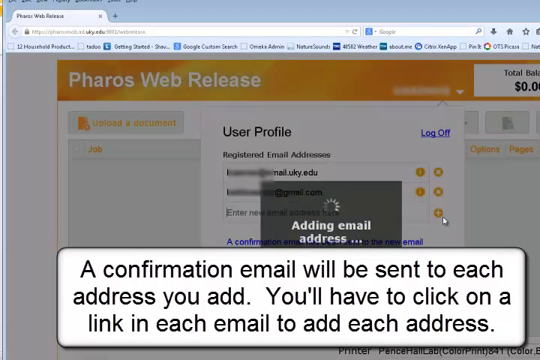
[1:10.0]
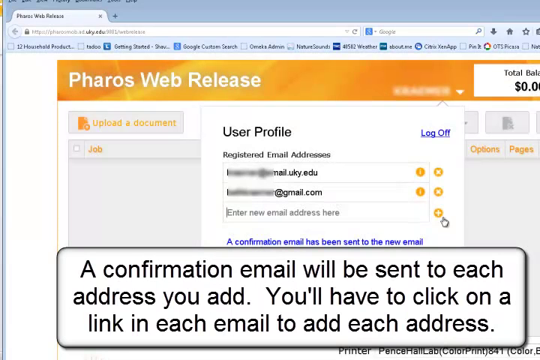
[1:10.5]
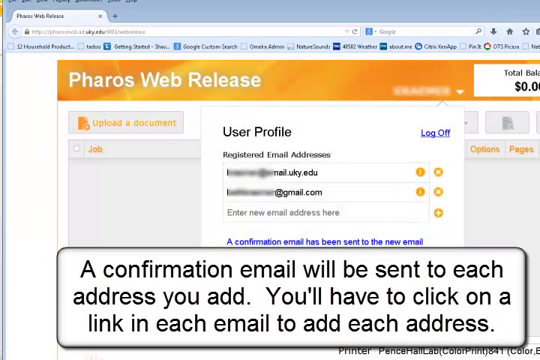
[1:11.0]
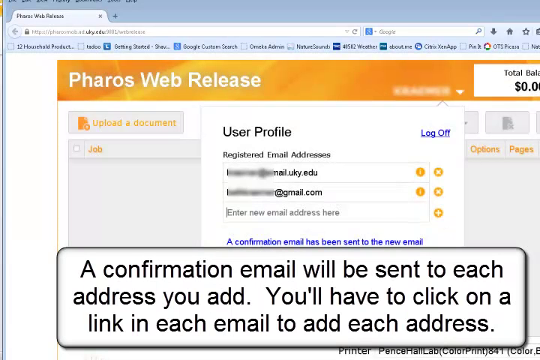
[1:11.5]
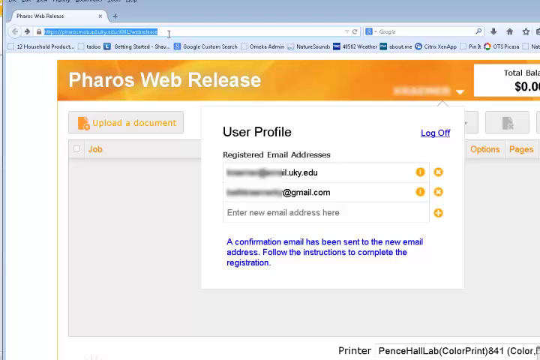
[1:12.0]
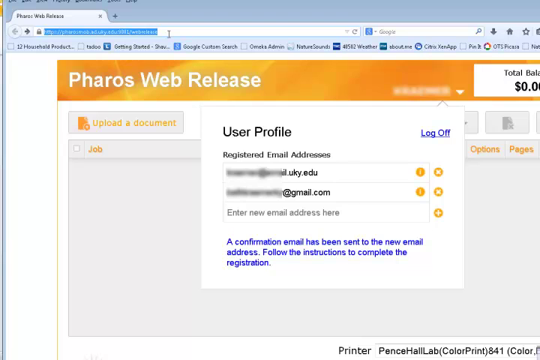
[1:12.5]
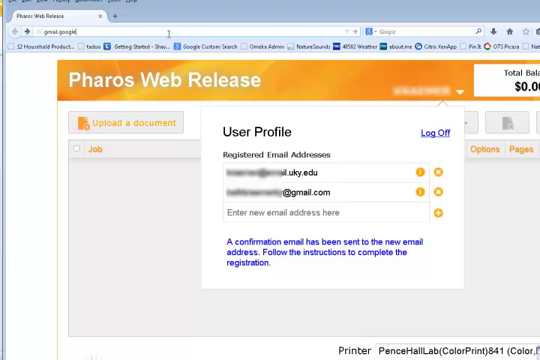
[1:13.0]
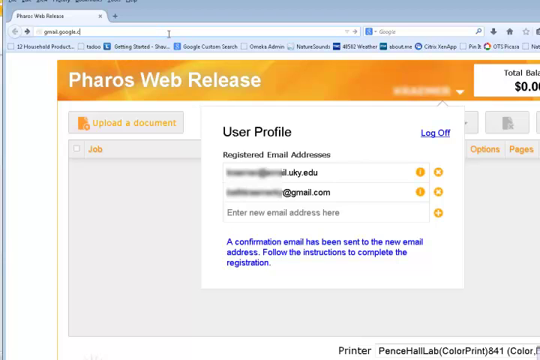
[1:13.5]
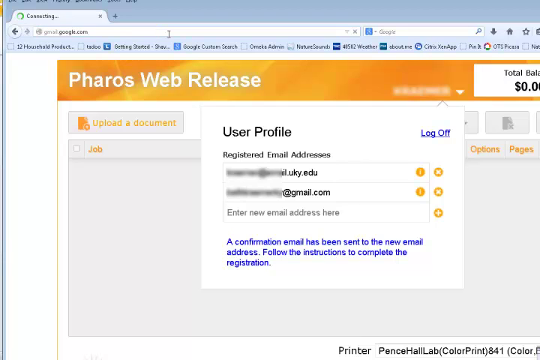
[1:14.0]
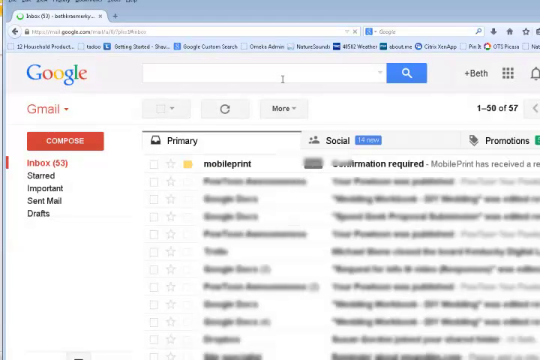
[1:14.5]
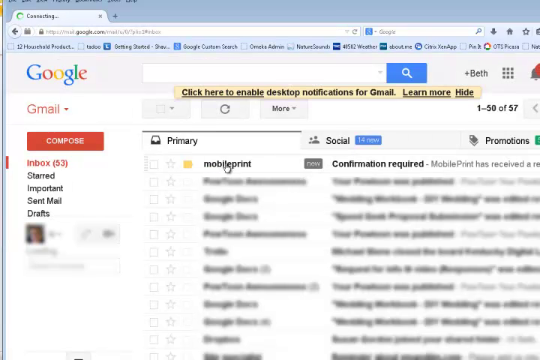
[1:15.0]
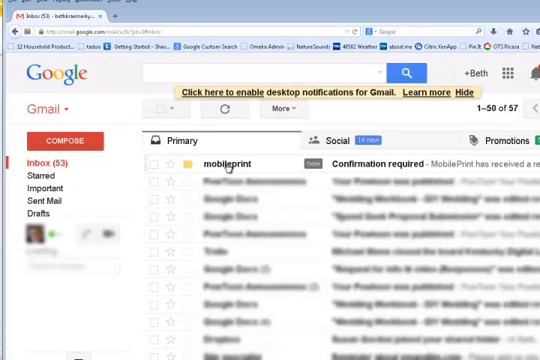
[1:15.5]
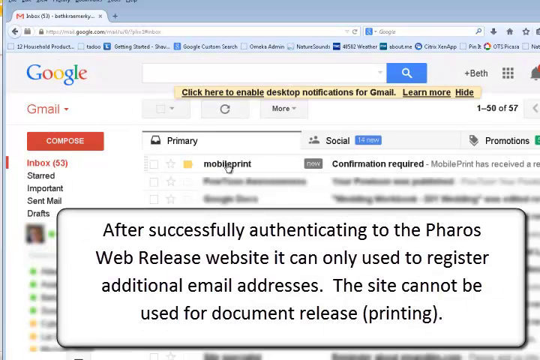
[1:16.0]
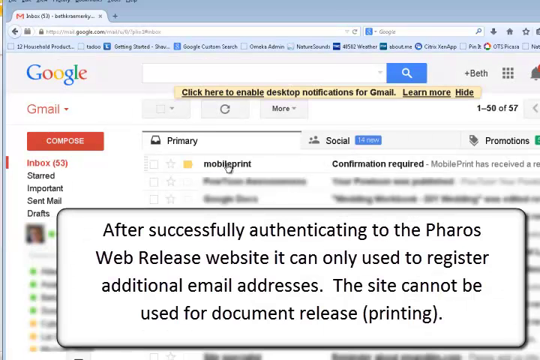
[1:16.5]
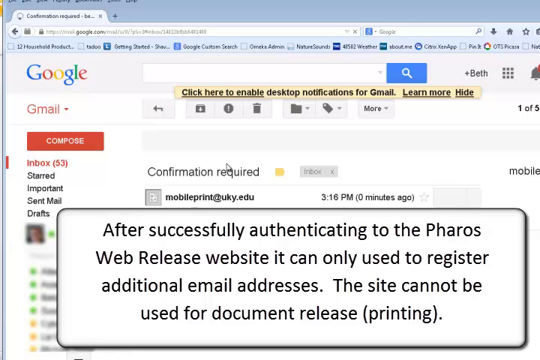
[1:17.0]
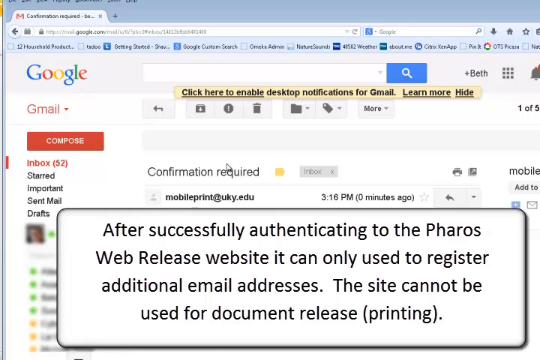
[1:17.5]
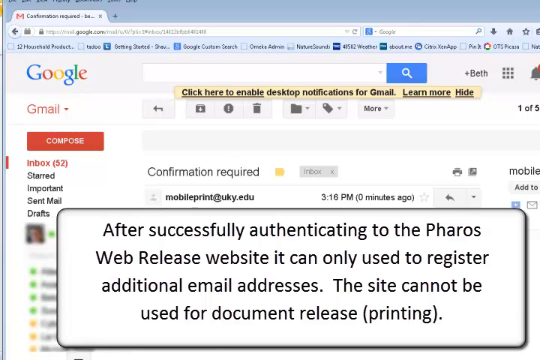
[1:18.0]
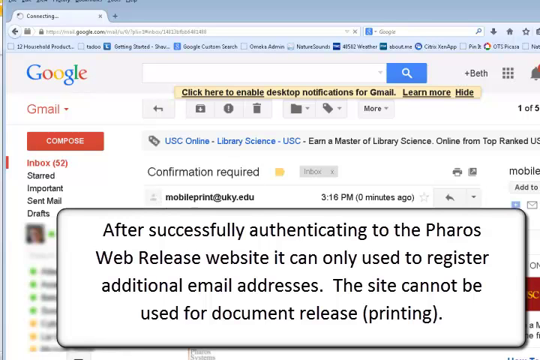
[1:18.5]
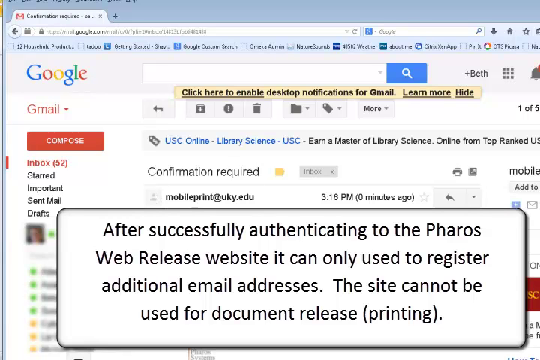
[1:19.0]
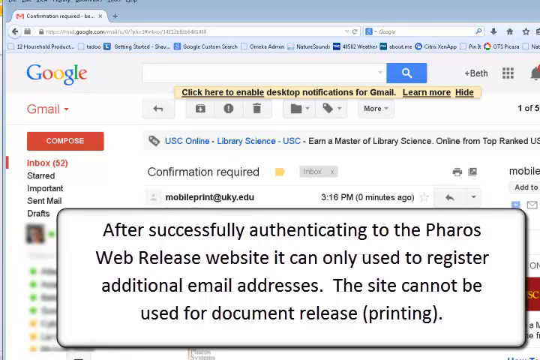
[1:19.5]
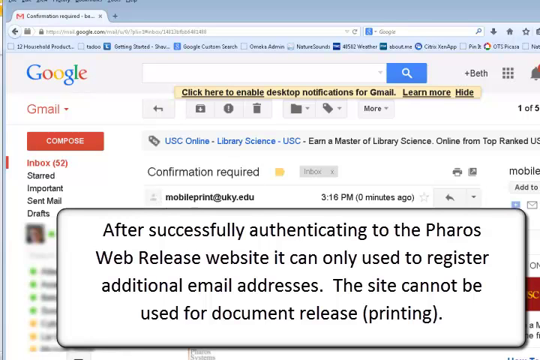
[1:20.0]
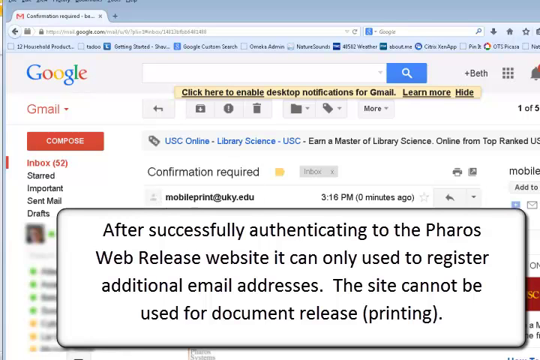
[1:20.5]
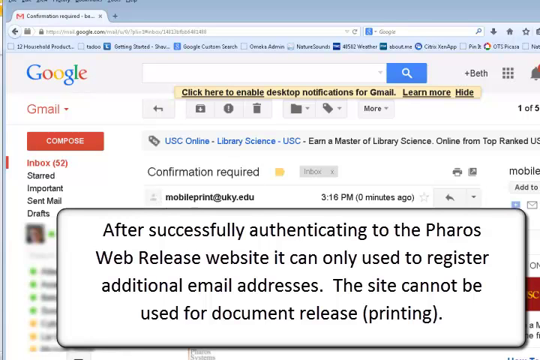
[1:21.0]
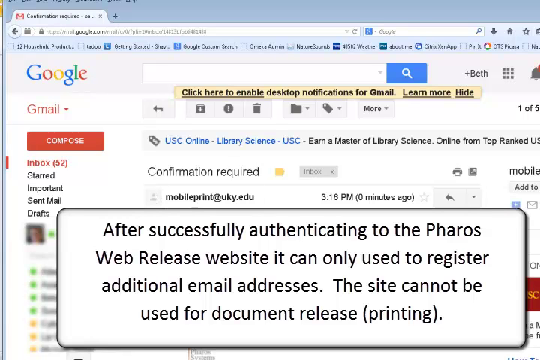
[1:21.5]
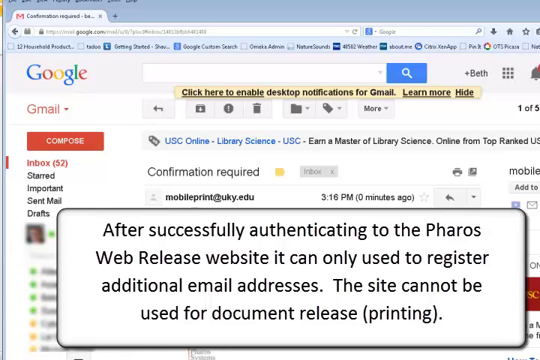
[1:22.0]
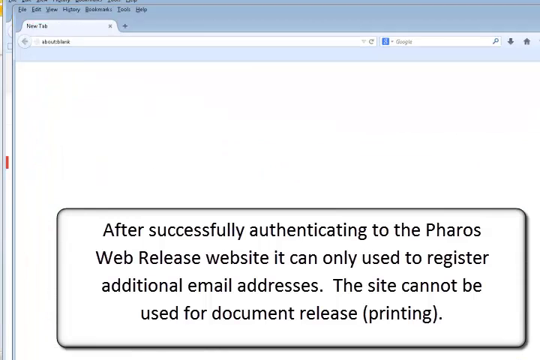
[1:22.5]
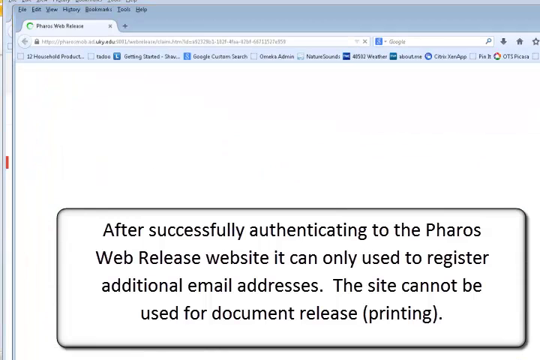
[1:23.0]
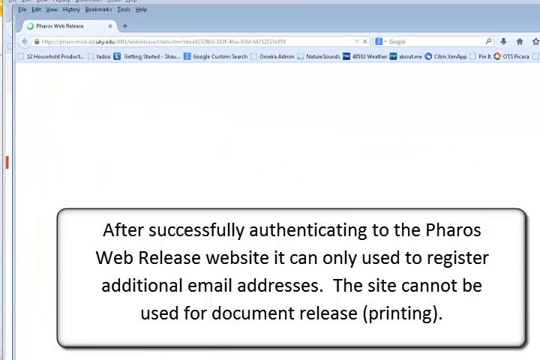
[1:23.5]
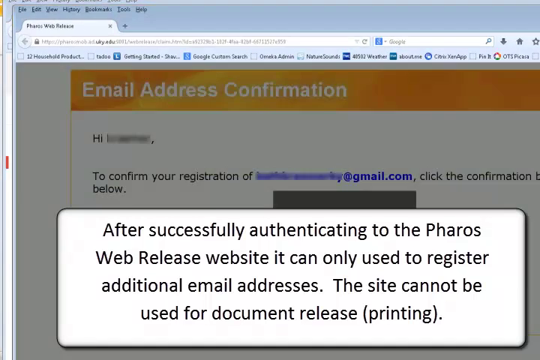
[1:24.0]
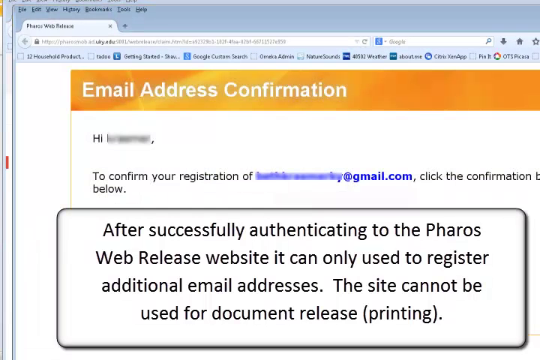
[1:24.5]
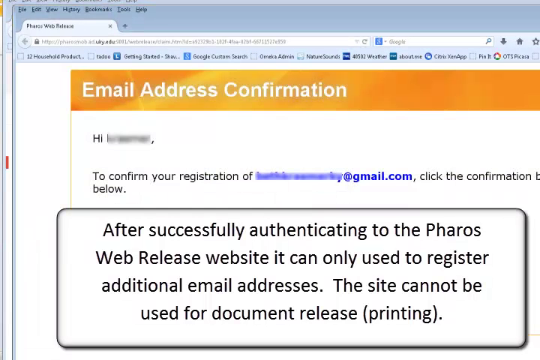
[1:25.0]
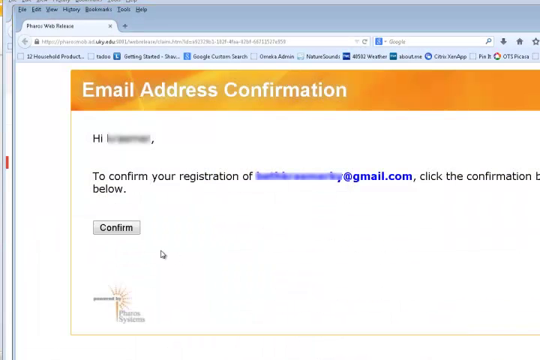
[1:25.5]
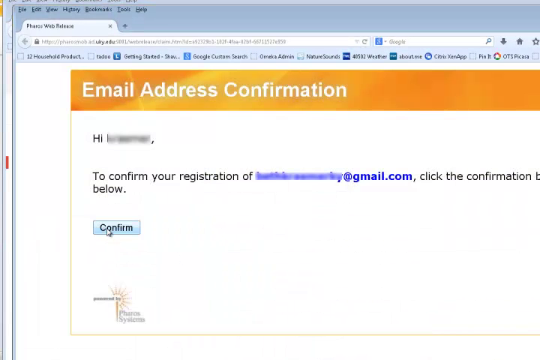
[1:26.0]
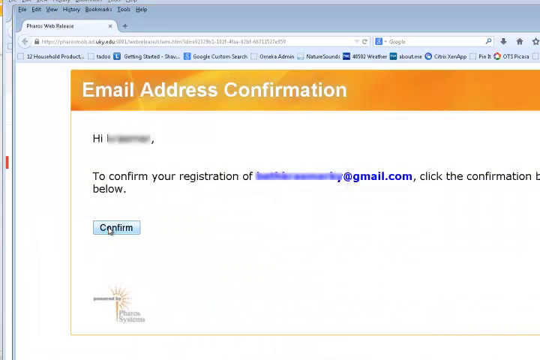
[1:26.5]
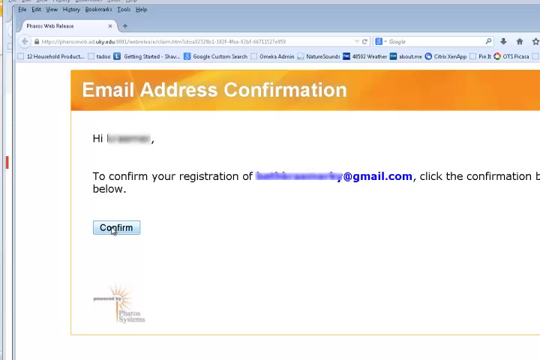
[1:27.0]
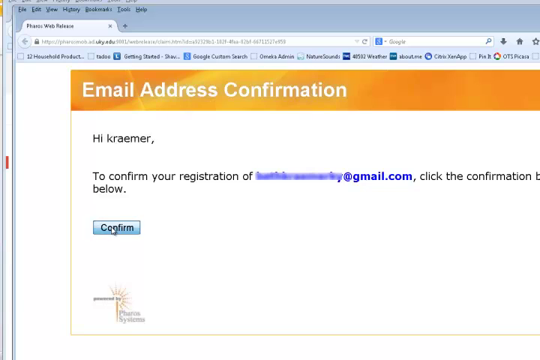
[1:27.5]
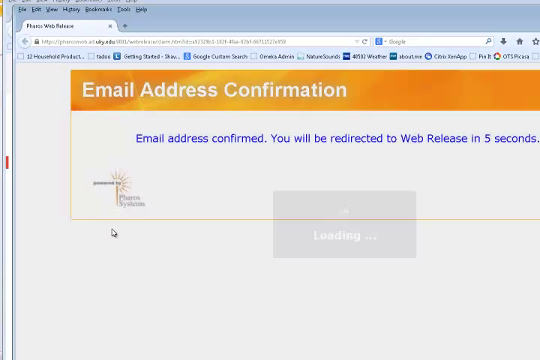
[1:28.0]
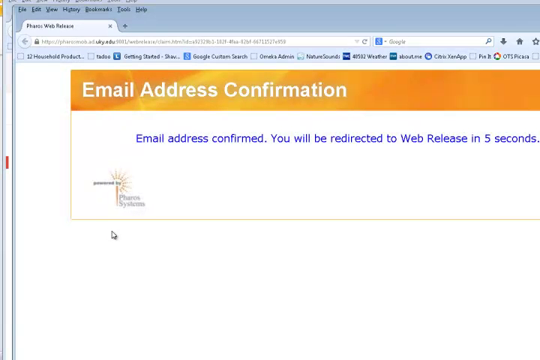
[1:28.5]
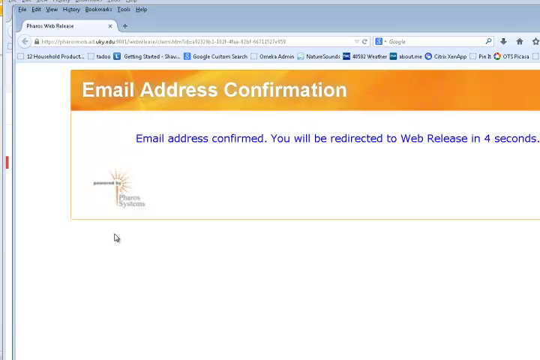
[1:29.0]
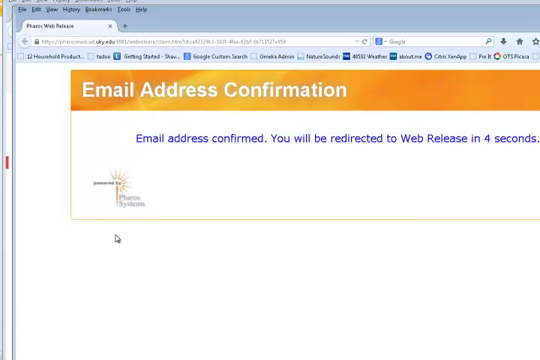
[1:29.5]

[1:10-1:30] The University of Kentucky Library mobile printing quick tip continues with the sign-up process on Pharos web release, where the person creates a user profile with their email address. A pop-up banner at the bottom says "a confirmation email will be sent to each email address you add. You'll have to click on a link in each email to add each address." Two addresses are added, one apparently a gmail.com address and one a uk.edu address, and the person clicks both. Text at the bottom reads "a confirmation email has been sent to the new email address. Follow the instructions to complete the registration." The person goes back to their email and is about to click on "mobile print email confirmation required". A pop-up window then says "after successfully authenticating to the Pharos web release website, it can only used to register additional email addresses" and "The site cannot be used for document release (printing)". The person clicks on it and reaches an email address confirmation page.